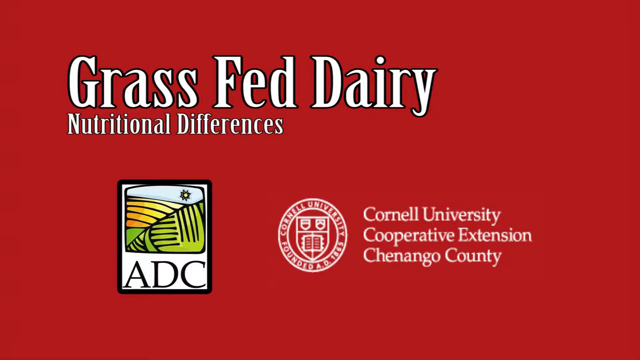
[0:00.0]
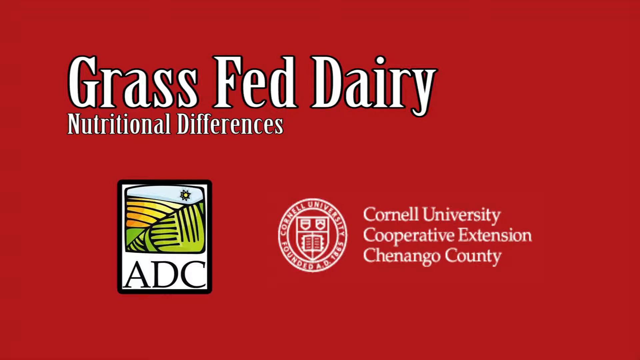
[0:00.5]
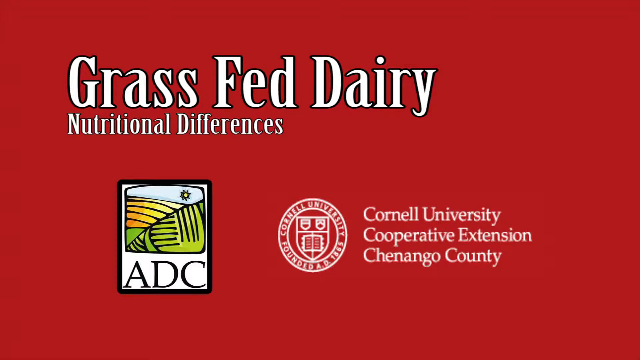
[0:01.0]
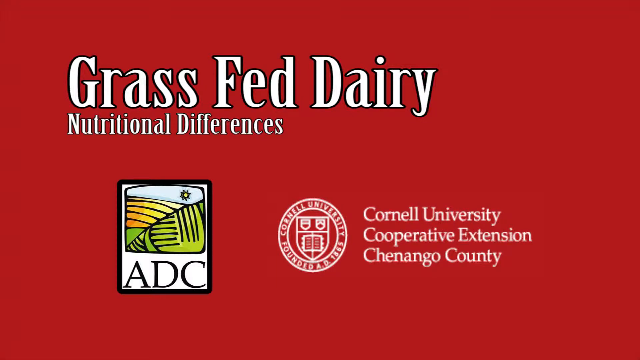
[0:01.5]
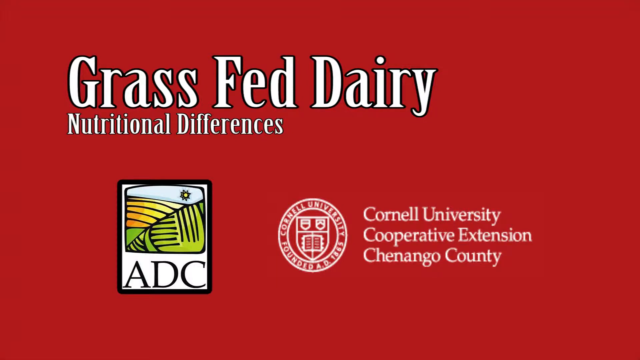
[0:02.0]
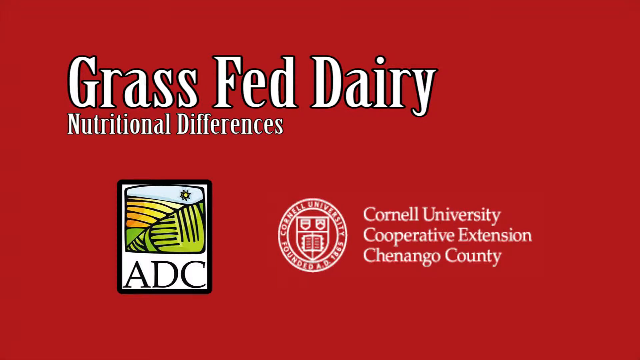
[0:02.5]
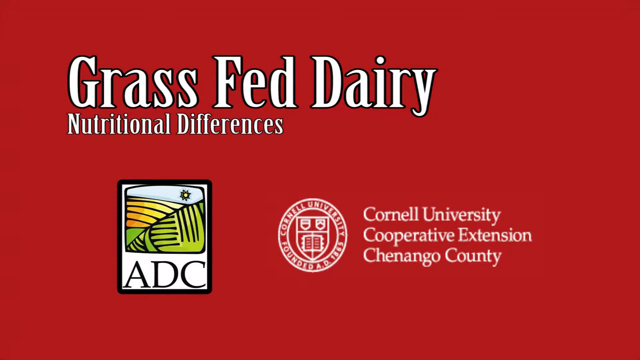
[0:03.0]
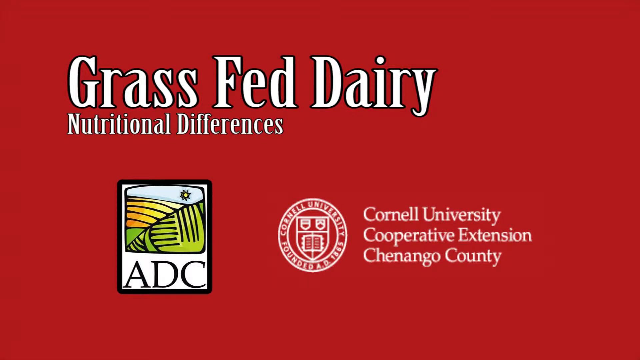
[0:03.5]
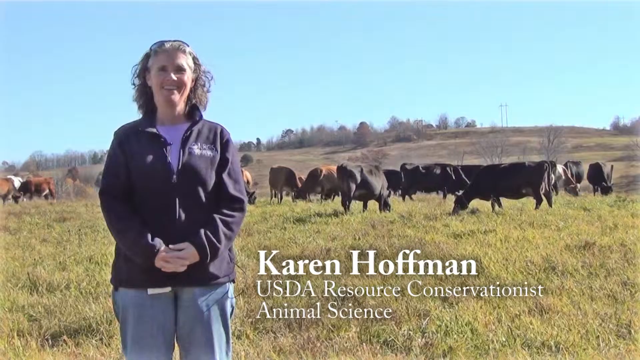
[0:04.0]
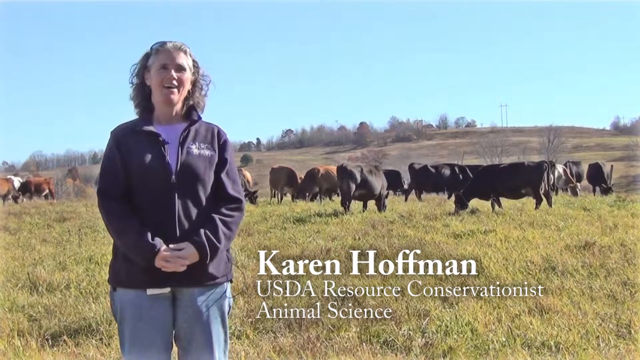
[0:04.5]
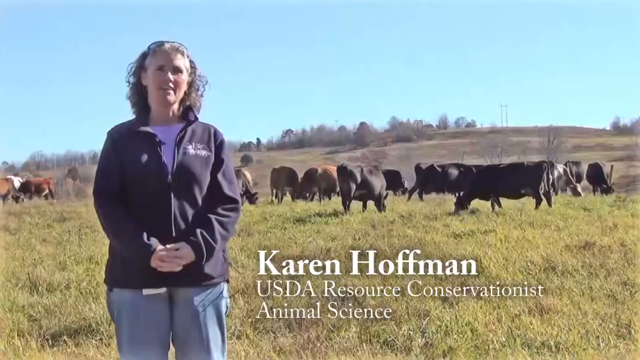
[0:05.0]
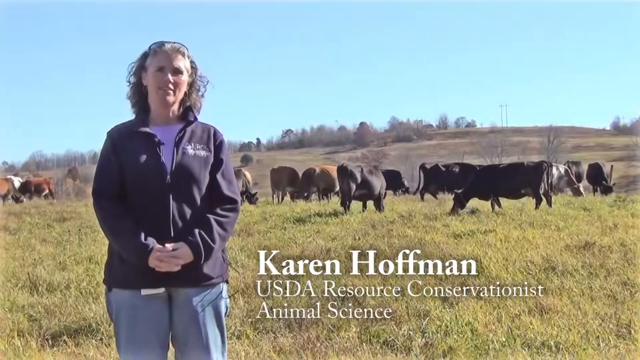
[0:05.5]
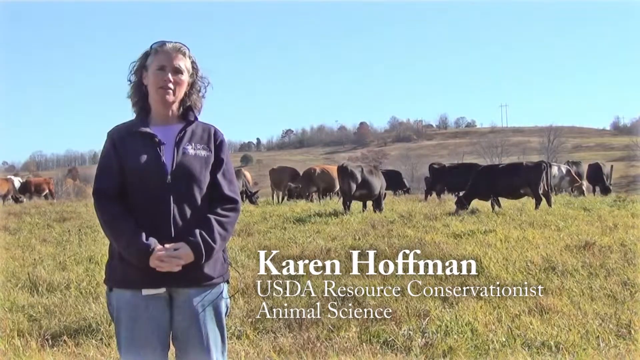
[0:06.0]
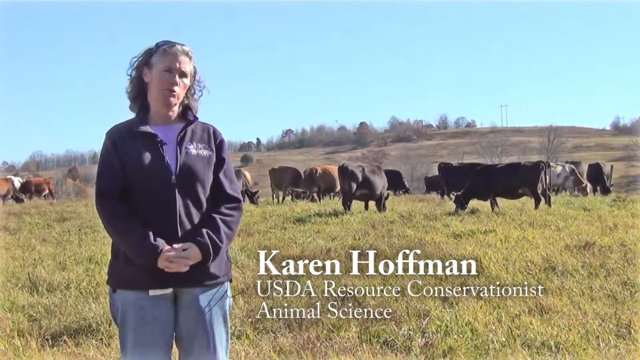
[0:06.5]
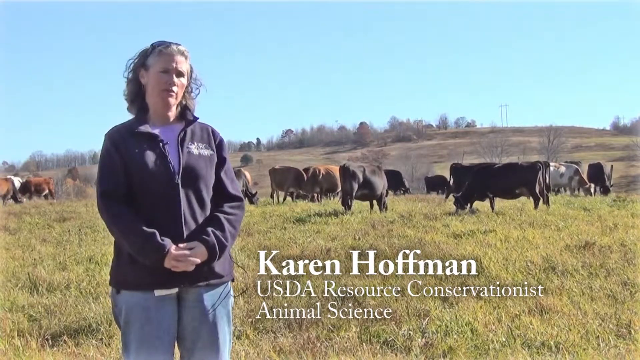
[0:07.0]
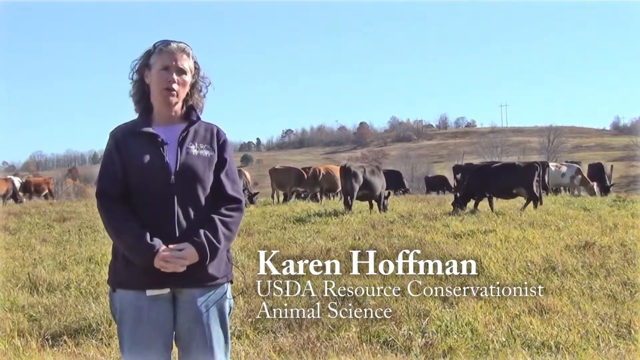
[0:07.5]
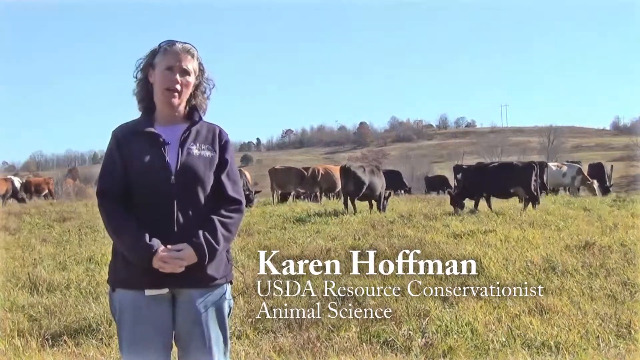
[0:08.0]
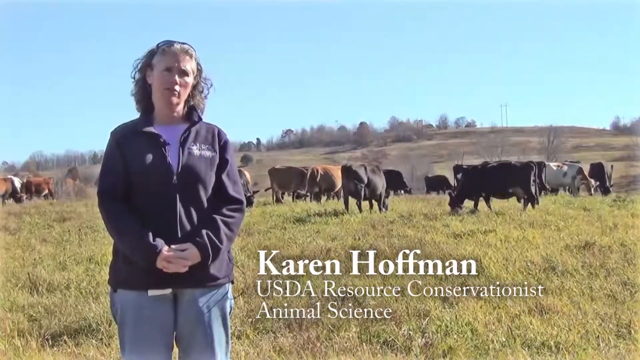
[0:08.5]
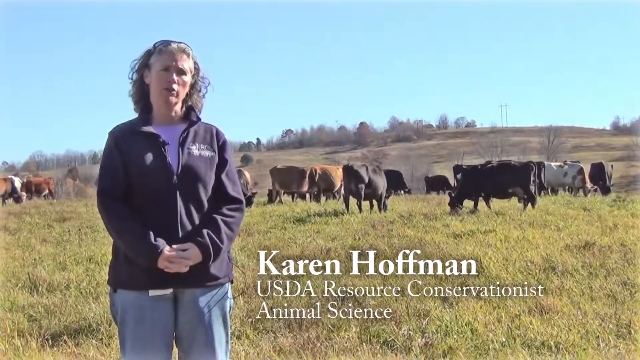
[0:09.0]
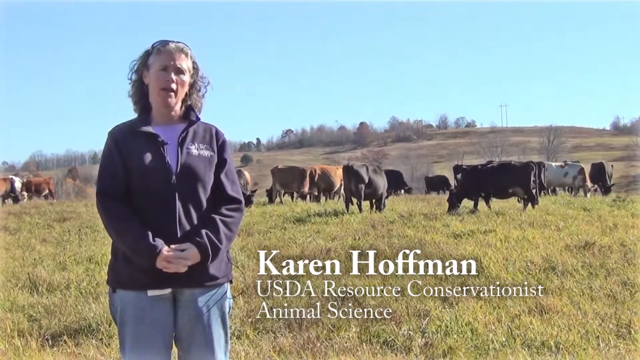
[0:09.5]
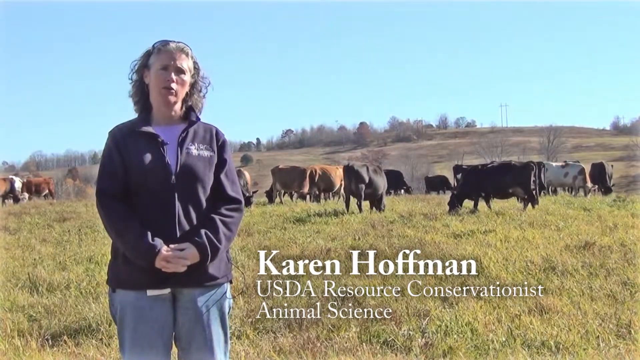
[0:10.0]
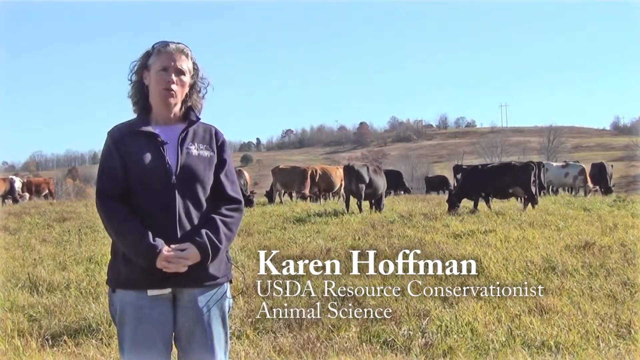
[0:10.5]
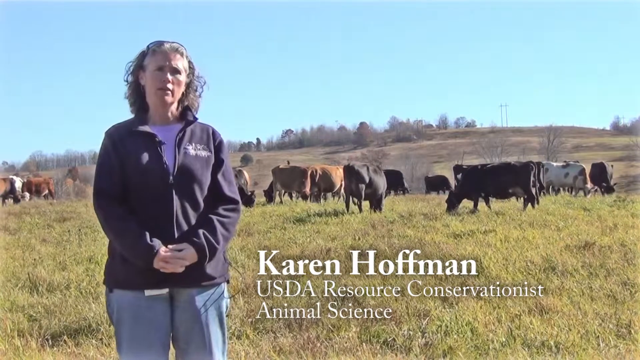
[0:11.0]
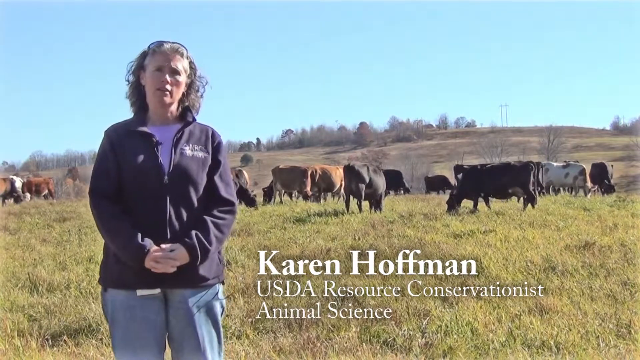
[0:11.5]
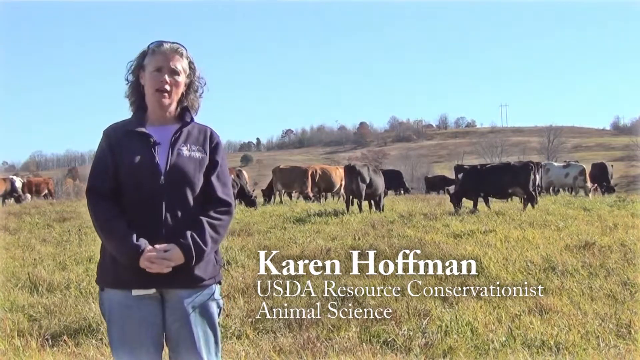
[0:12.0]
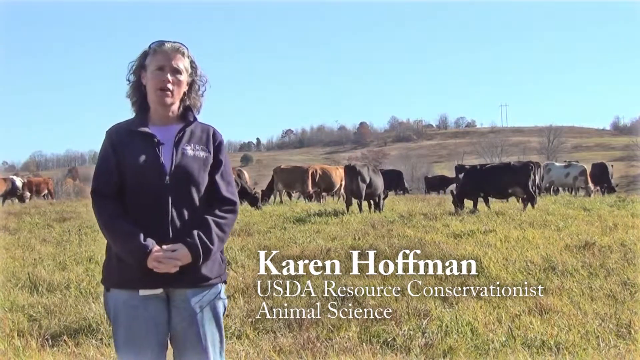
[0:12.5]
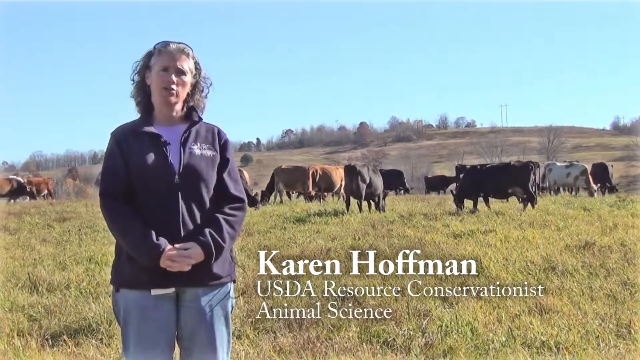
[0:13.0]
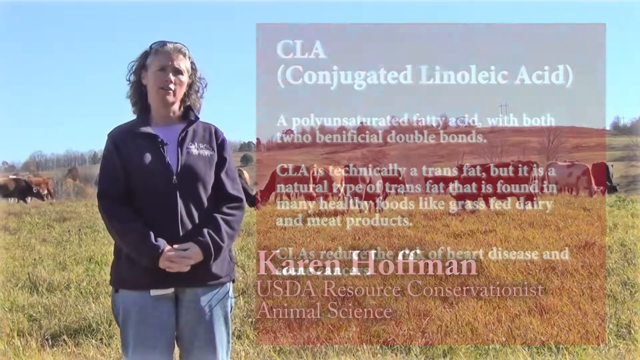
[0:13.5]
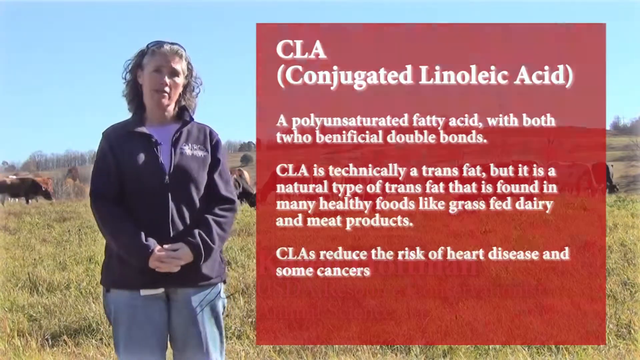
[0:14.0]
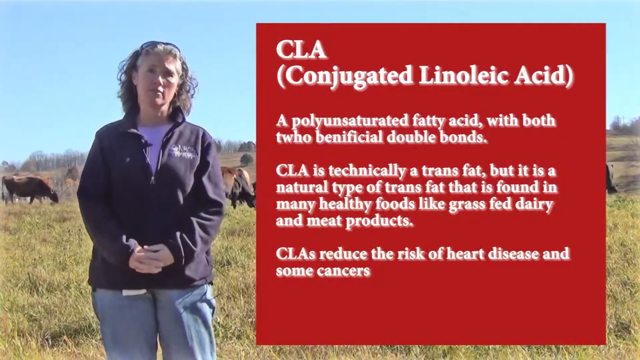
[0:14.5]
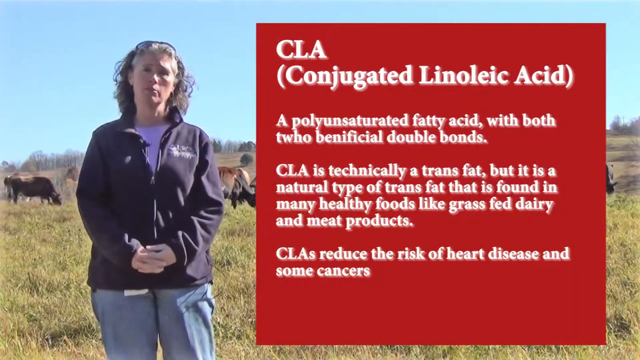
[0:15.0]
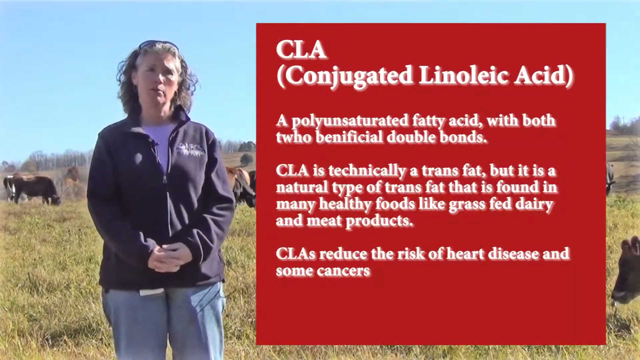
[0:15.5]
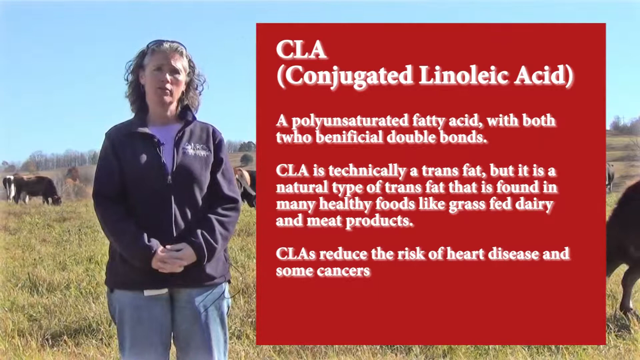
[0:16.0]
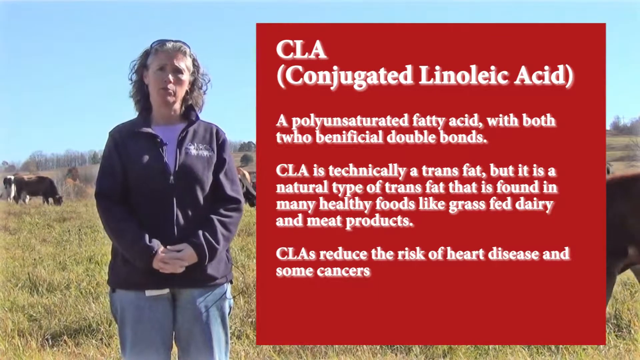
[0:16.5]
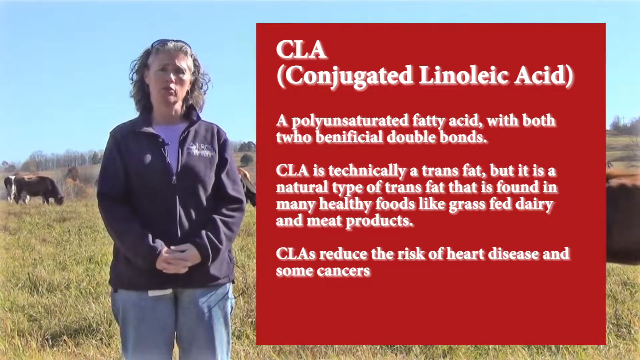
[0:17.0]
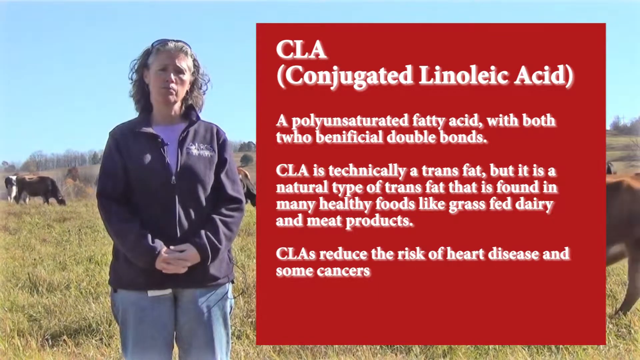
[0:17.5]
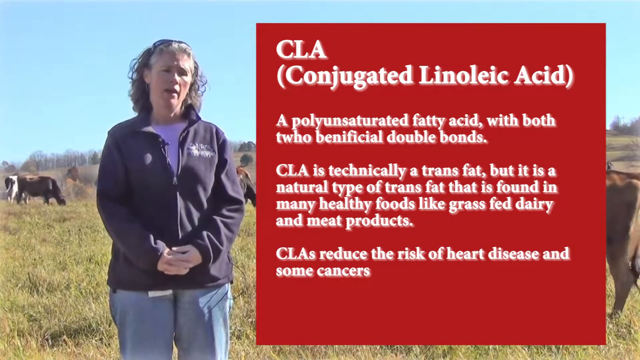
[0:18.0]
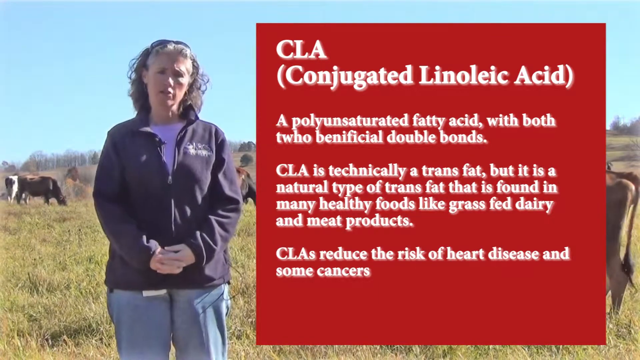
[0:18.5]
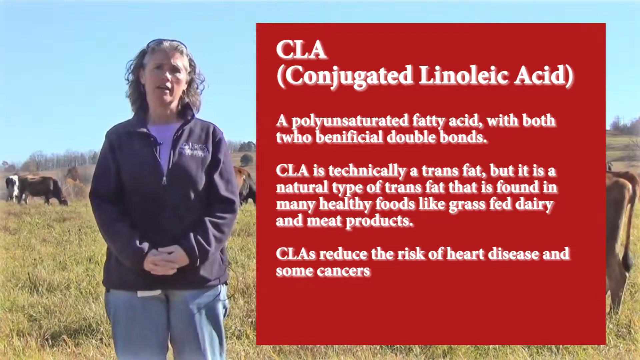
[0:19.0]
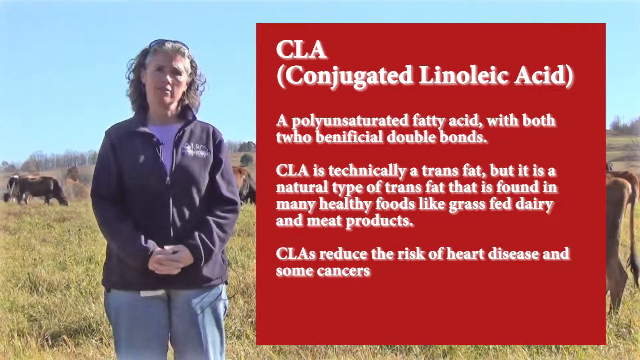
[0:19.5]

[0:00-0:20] Cornell University is shown at the beginning, along with content about grass-fed dairy. A farm appears, and Karen Huffman, a female animal scientist and USDA Resource Conservationist, stands on a field or pasture. Behind her, at the far end, cows graze on green grass; many of them are female cows. In another scene, a note appears on the screen about conjugated linoleic acid, describing it as a polyunsaturated fatty acid with two beneficial double bonds. The note says CLA is technically a trans fat but a natural type found in many healthy foods, such as grass-fed dairy and meat products, and that CLA reduces the risk of heart disease and some cancers. The note is written on a red background alongside the standing woman. Dairy cattle are behind her. She wears a navy jacket and has long hair.